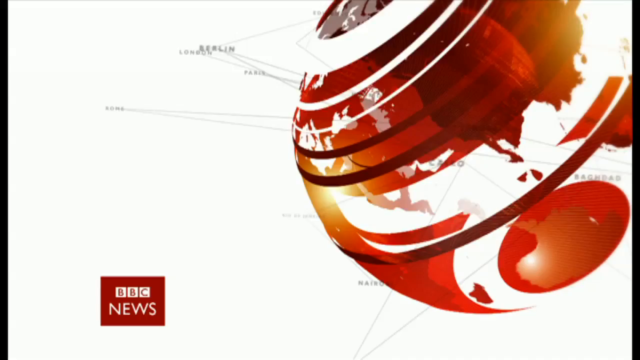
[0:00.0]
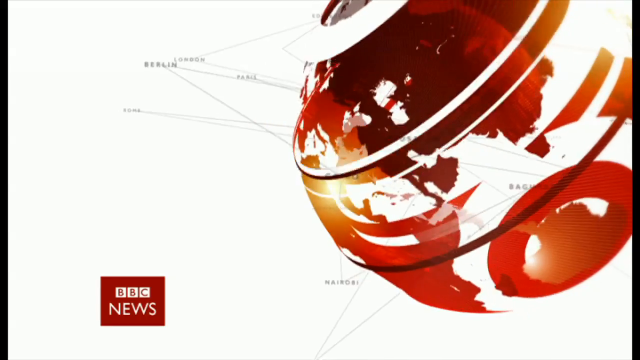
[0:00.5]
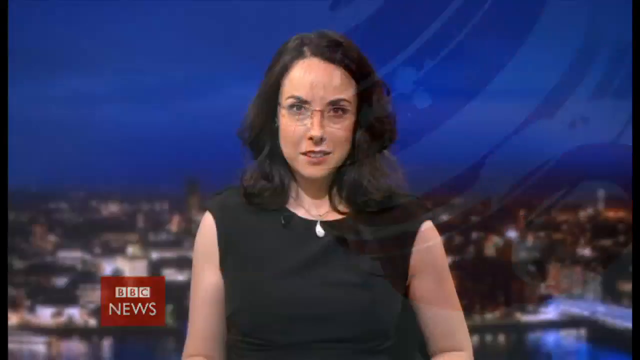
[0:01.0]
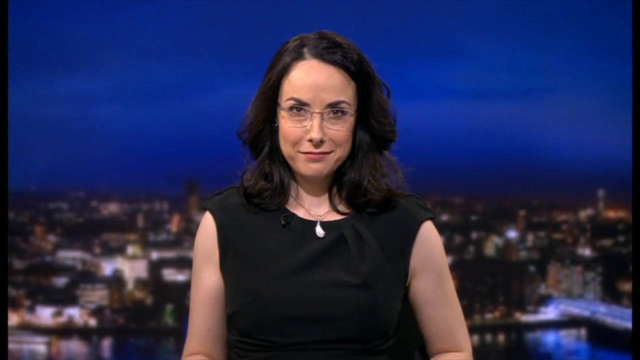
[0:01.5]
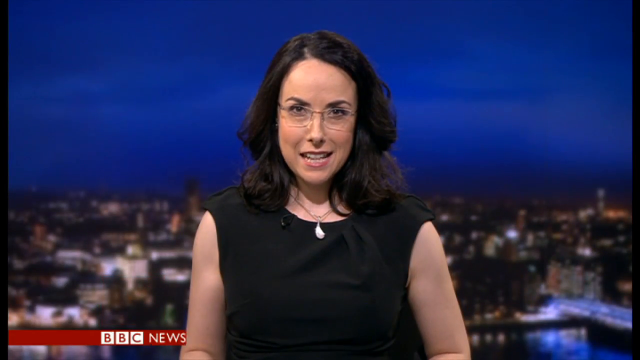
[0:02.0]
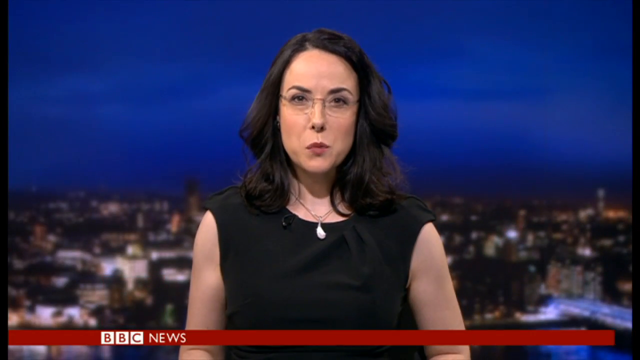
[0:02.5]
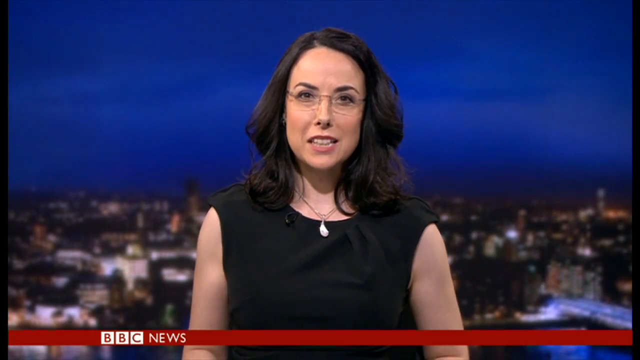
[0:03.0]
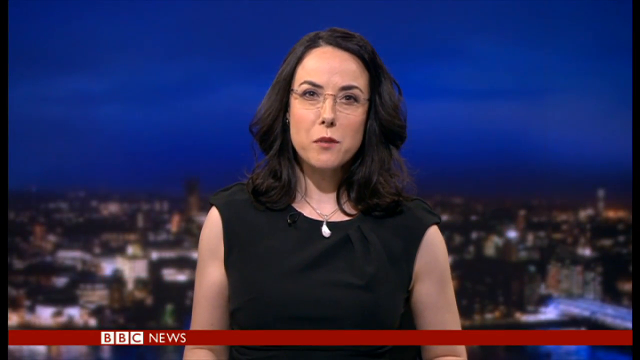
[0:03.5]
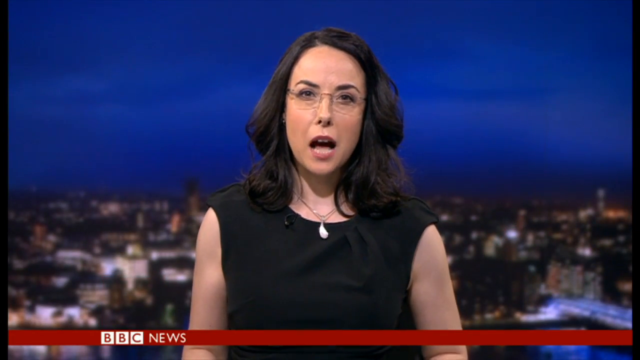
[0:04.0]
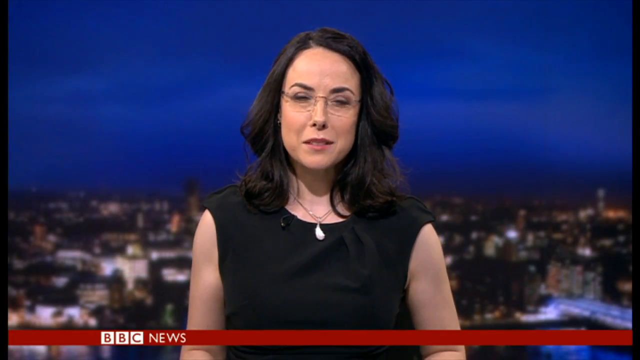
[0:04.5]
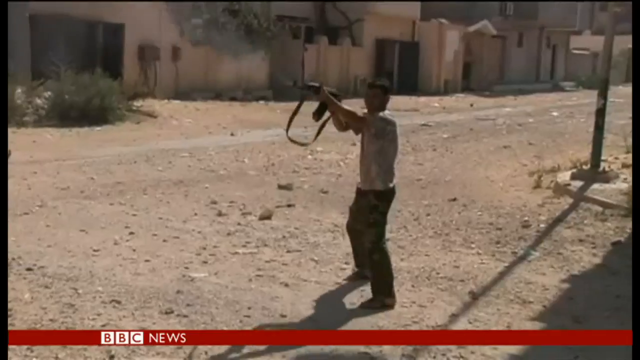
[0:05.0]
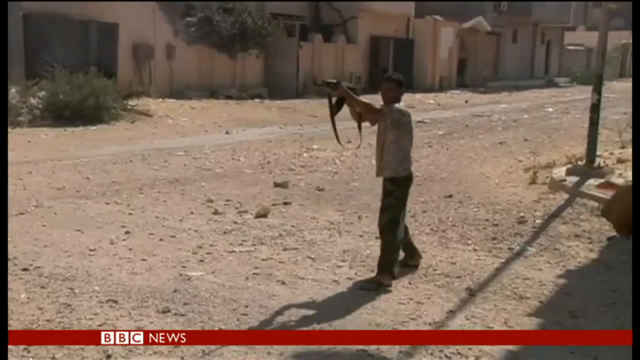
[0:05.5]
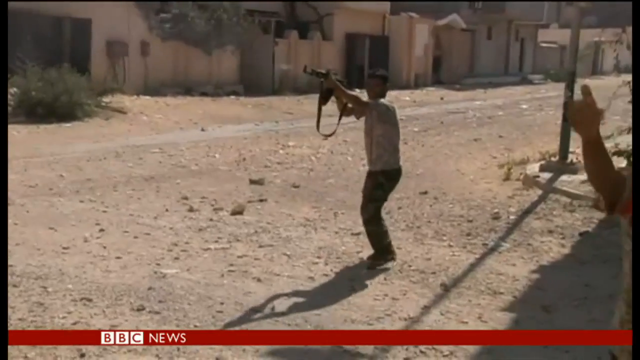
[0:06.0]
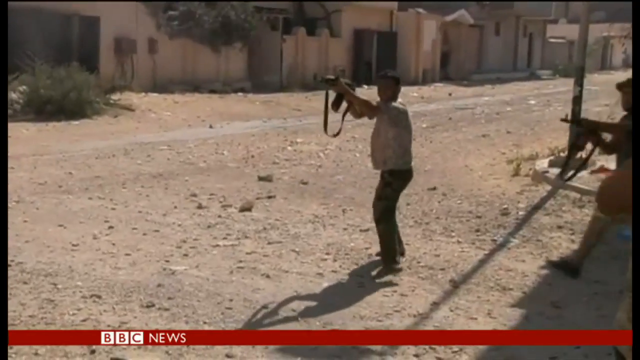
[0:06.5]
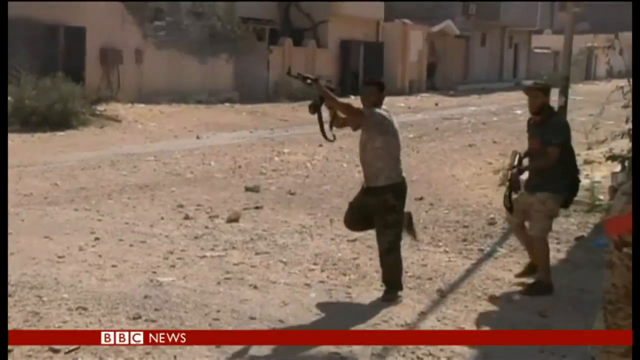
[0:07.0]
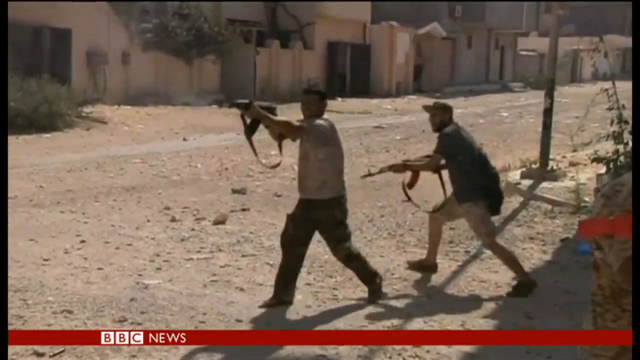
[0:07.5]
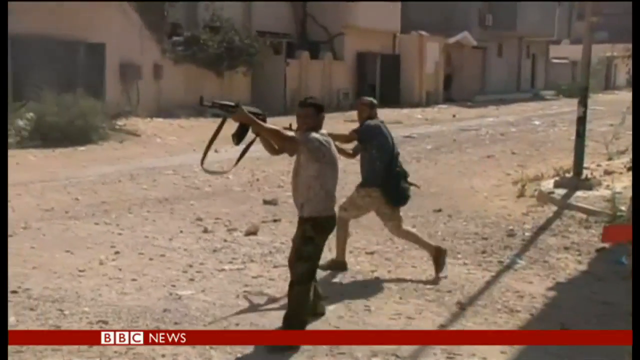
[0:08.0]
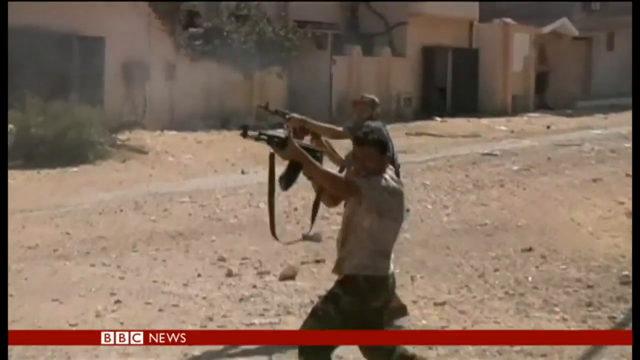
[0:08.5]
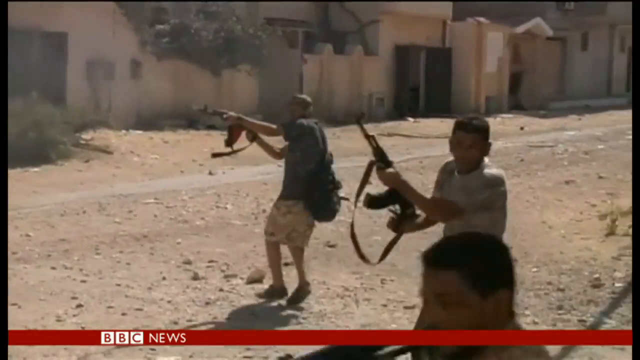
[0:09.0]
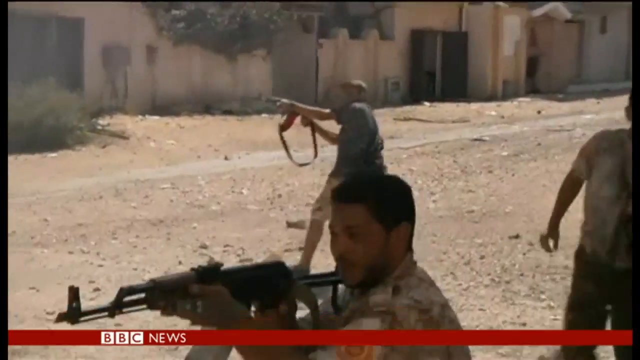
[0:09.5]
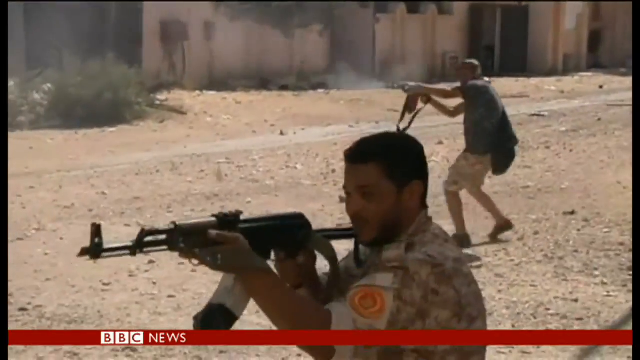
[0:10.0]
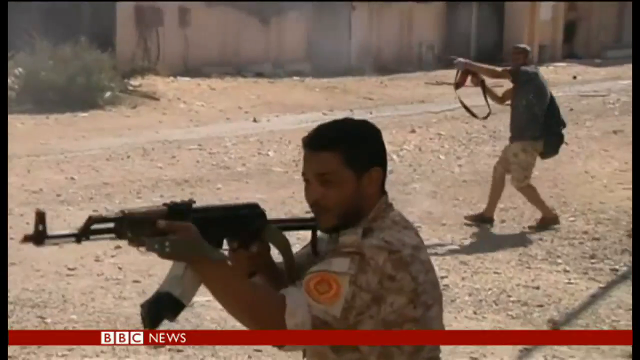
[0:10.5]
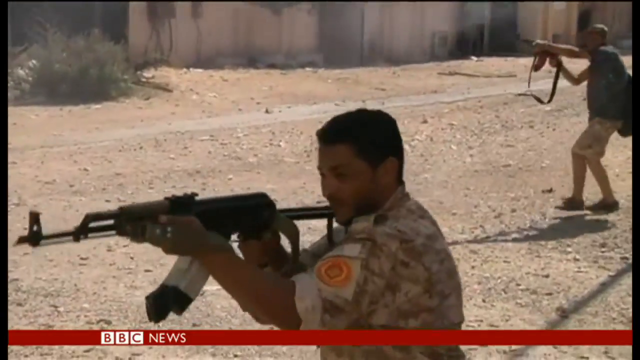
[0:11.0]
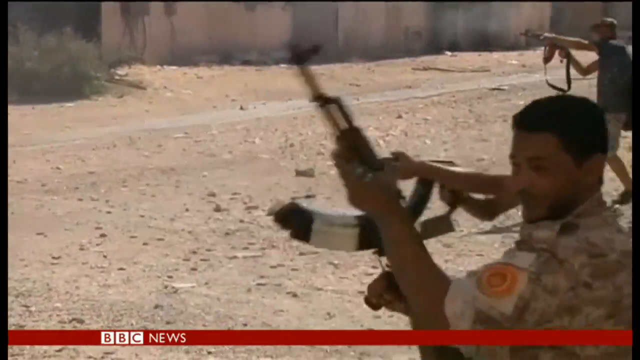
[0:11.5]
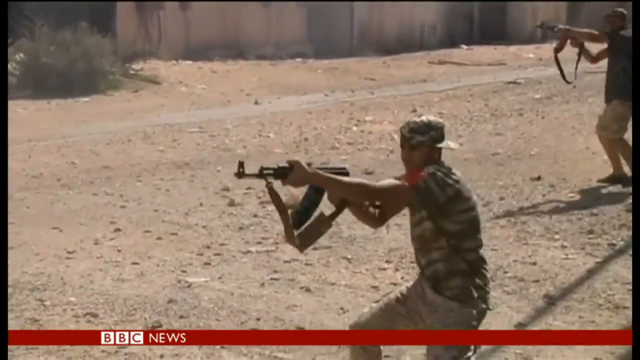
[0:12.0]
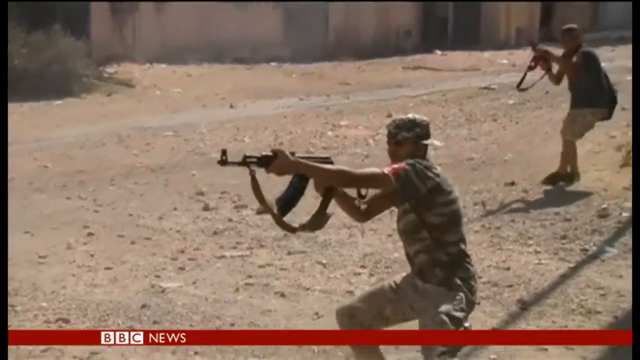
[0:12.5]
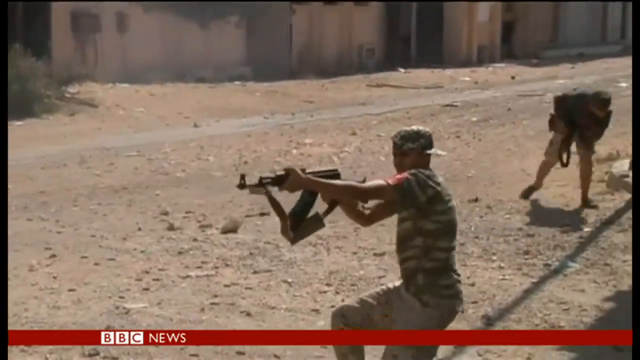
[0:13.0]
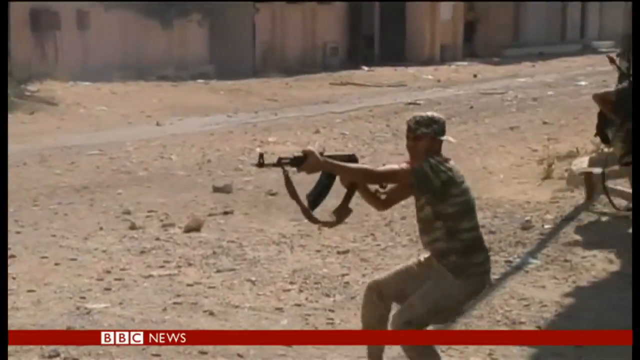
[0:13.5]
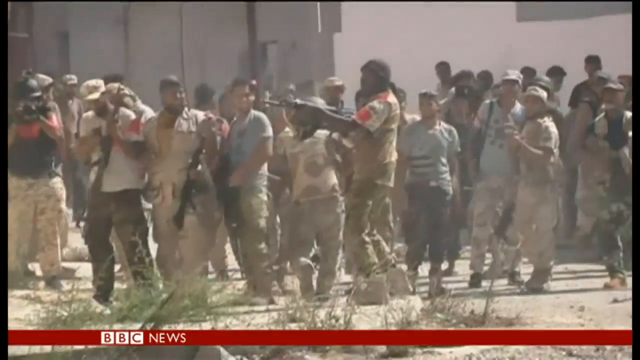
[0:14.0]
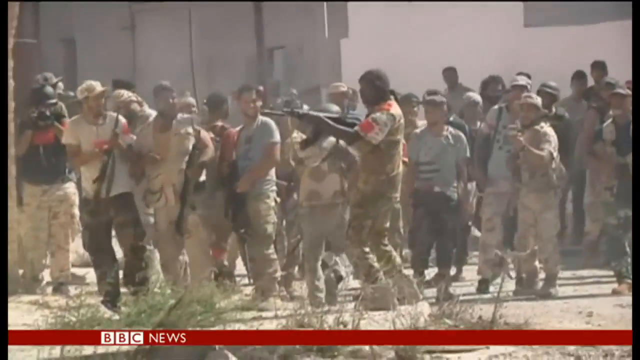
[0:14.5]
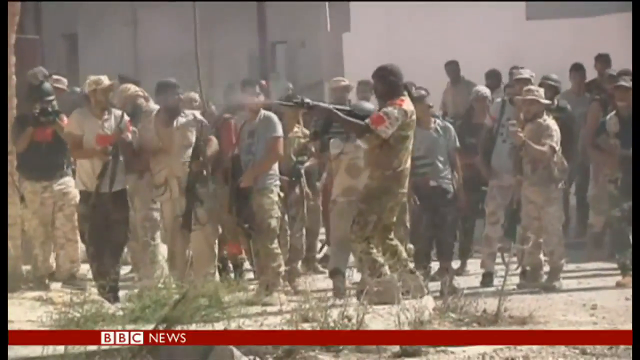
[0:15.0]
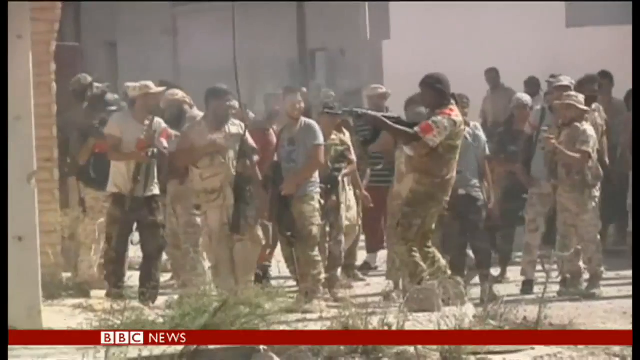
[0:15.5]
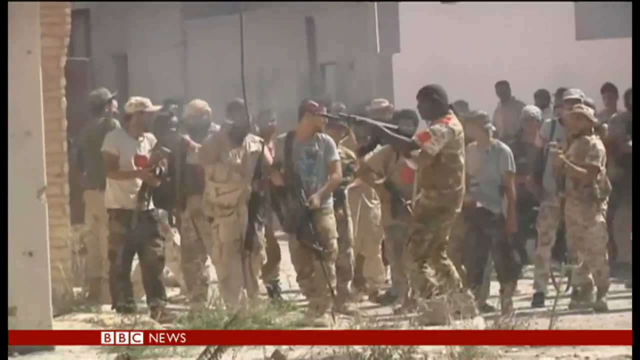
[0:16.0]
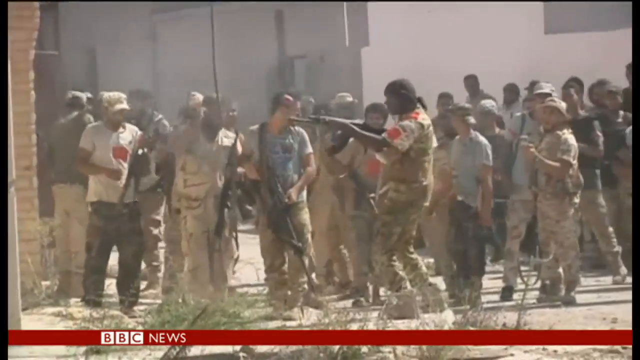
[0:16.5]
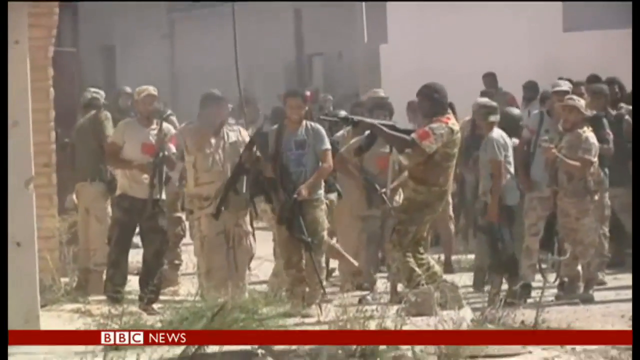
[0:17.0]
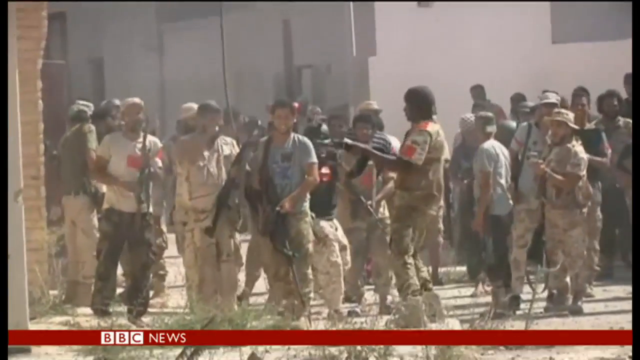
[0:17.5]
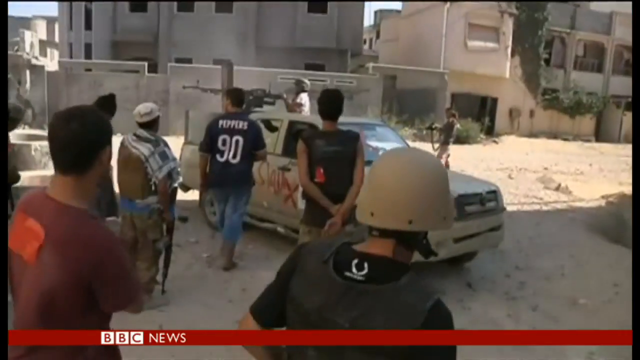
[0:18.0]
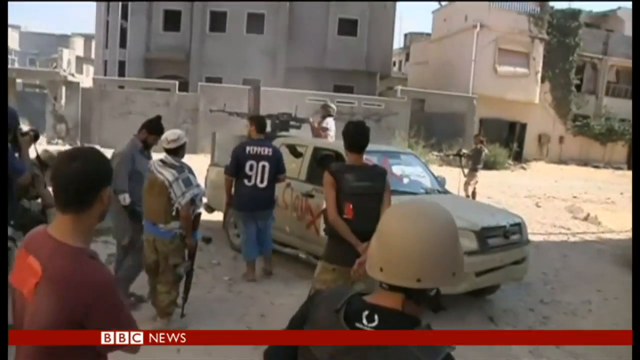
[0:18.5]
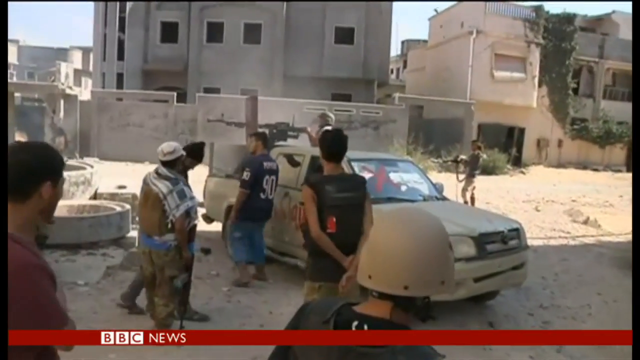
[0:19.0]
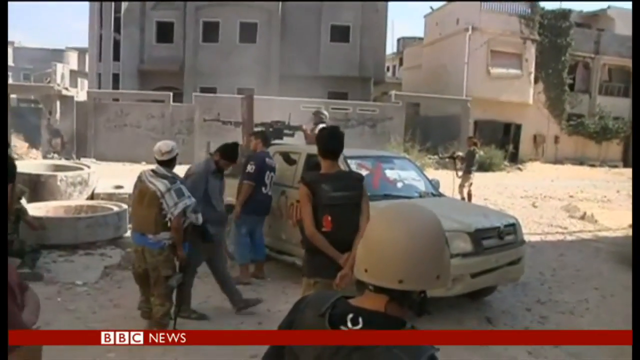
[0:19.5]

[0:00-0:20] A rotating, 3D simulated-looking globe appears, with oranges and whites in it. White circles go around it in different spots, and it spins so the circles seem to come from the top to the bottom. At the bottom, a little to the right rather than all the way to the left, the text reads "BBC News": a red box with "BBC" in reverse print, and "News" bigger behind or underneath it. The video then goes to a news anchor, apparently a woman maybe in her 30s, who speaks briefly. She wears glasses, a necklace and a black sleeveless shirt, and she stands in front of a cityscape that seems to be at nighttime. Next, video footage shows a man standing out and shooting an assault gun with a black strap, holding it out in front of him instead of positioned to his side for support, while other men do the same thing, shooting and retreating off to the right. Another video segment shows a man in a durag, camo-like fatigue pants and a vest shooting, while other armed people on the left stand and watch him. Another shows a man on a turret on the back of a truck; the side of the truck has some kind of red spray paint. To the left, next to the truck, a man in a Chili Peppers-like jersey with number 90 on it looks over toward where the shooter is aiming, on the left side in the distance.